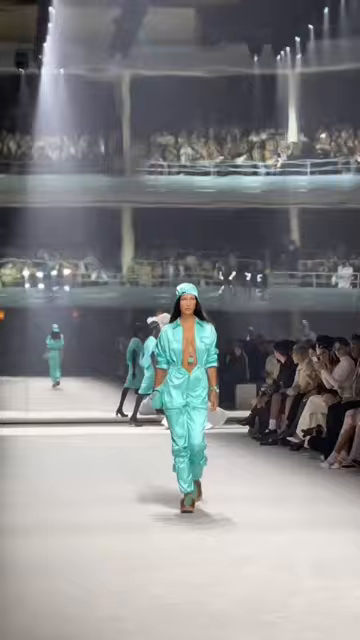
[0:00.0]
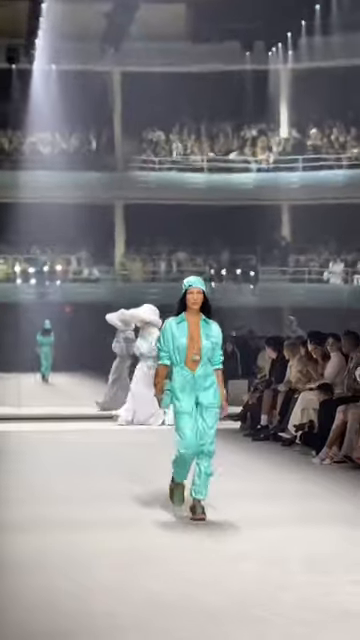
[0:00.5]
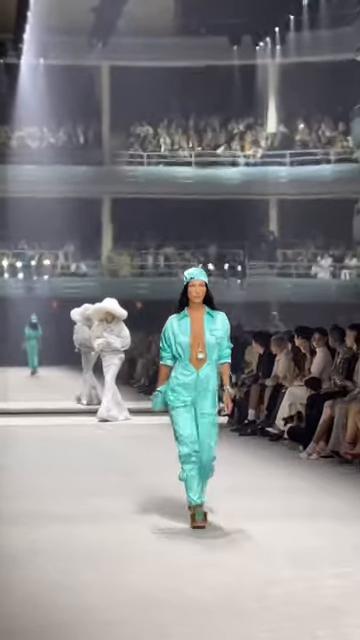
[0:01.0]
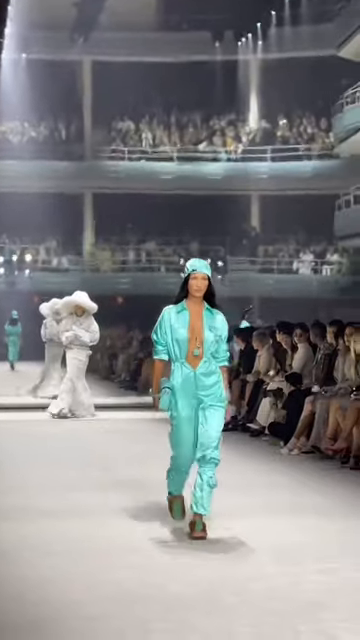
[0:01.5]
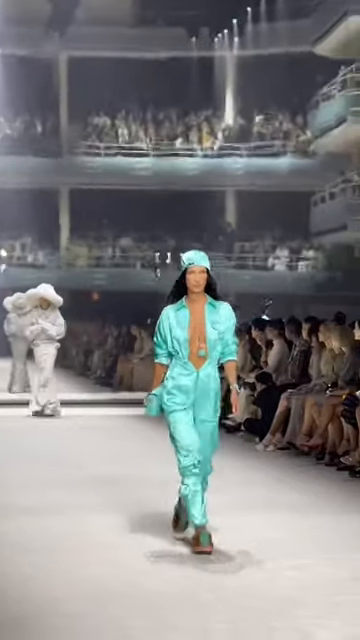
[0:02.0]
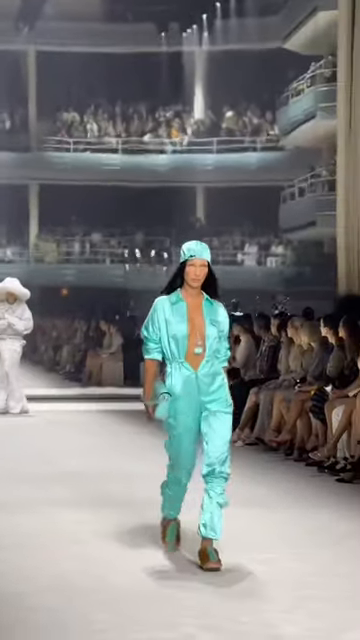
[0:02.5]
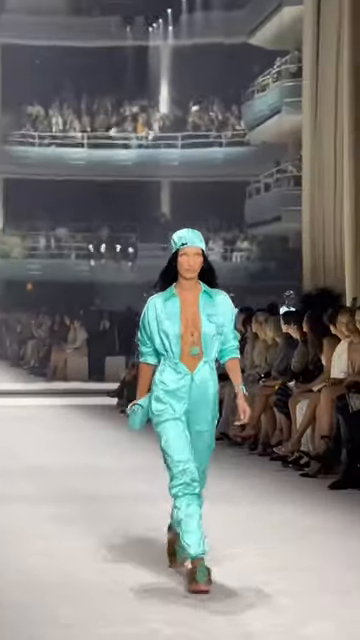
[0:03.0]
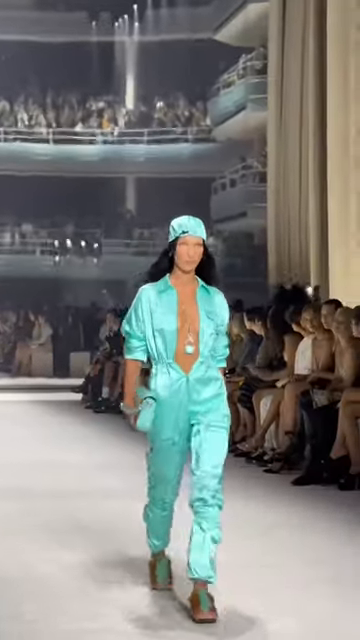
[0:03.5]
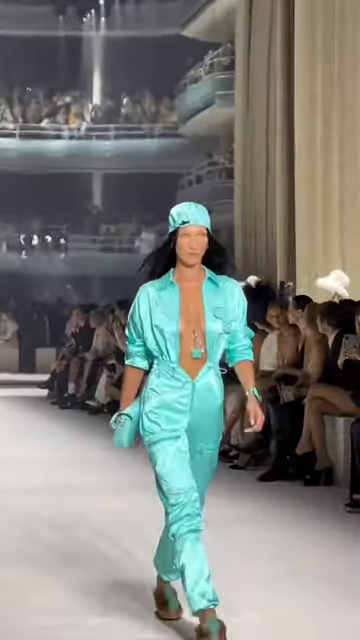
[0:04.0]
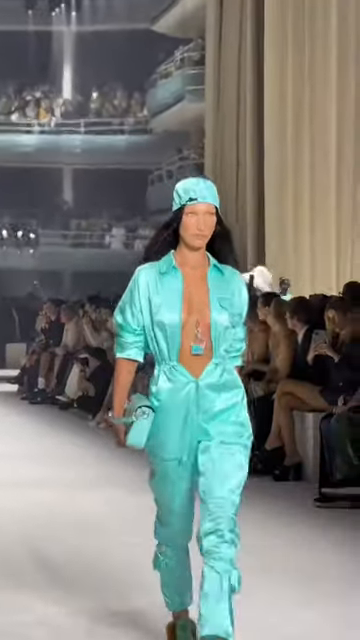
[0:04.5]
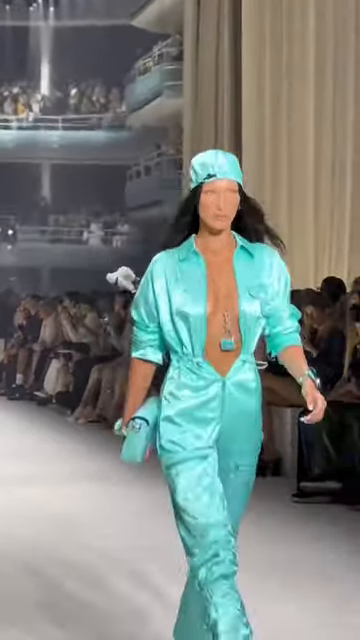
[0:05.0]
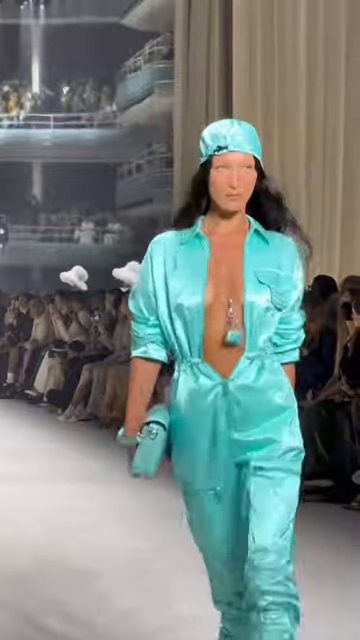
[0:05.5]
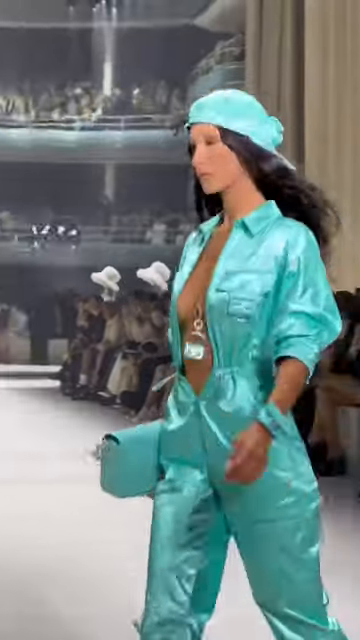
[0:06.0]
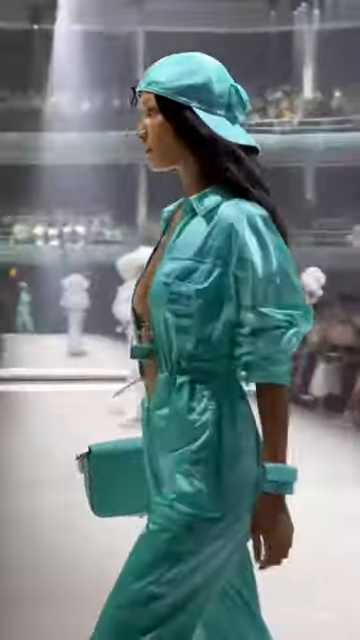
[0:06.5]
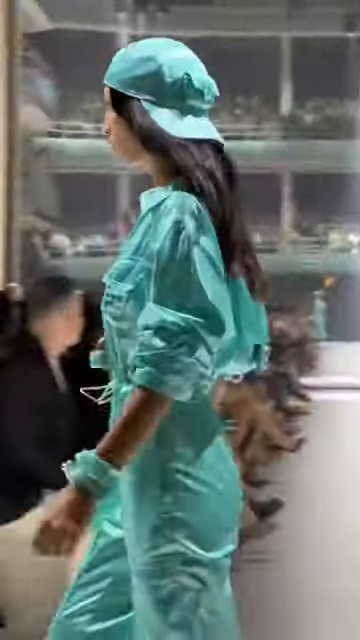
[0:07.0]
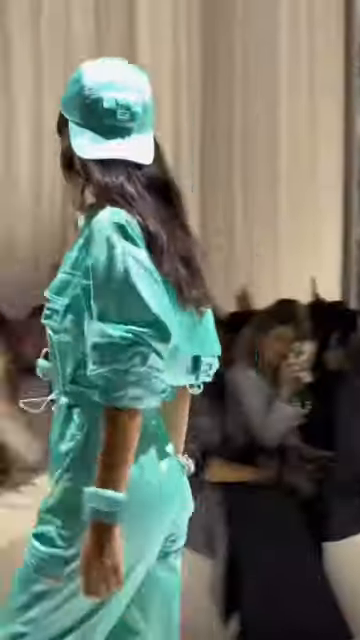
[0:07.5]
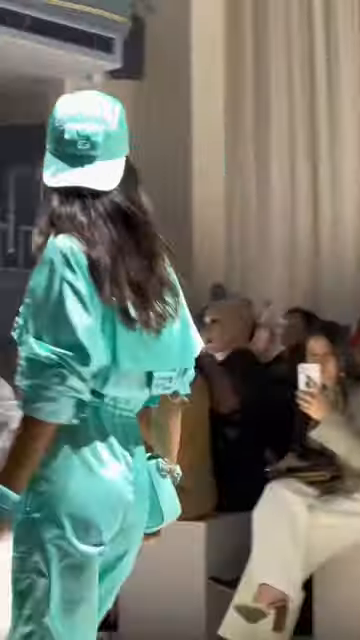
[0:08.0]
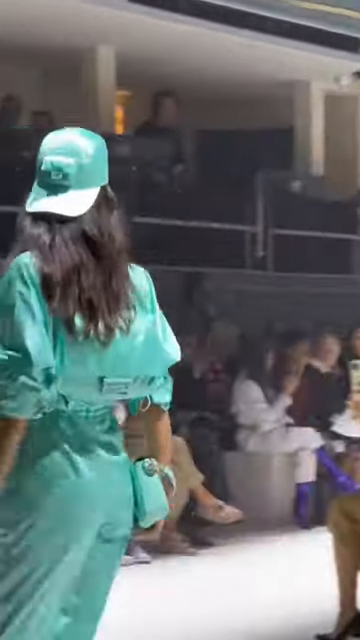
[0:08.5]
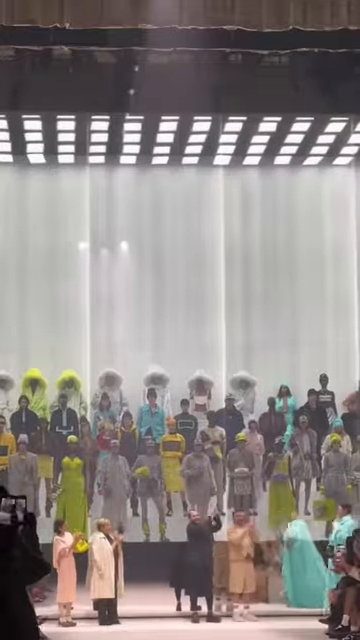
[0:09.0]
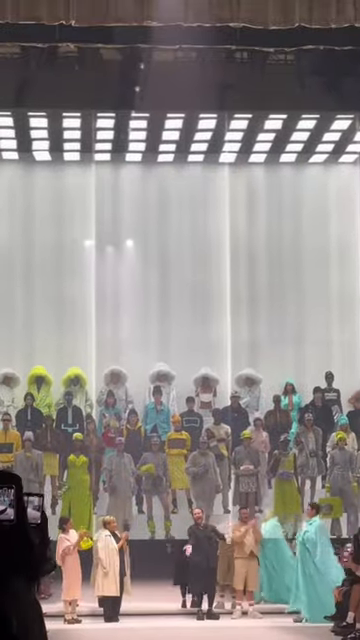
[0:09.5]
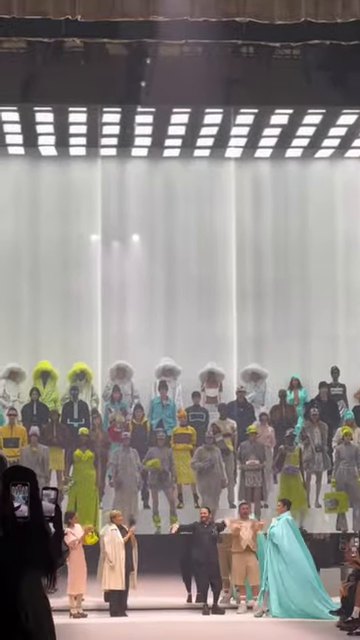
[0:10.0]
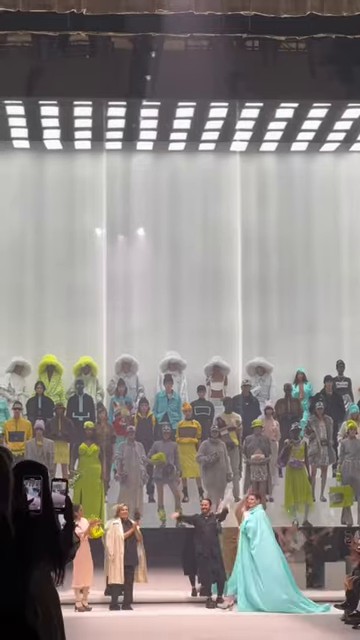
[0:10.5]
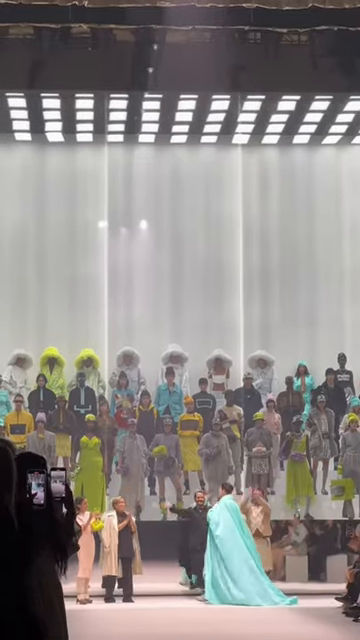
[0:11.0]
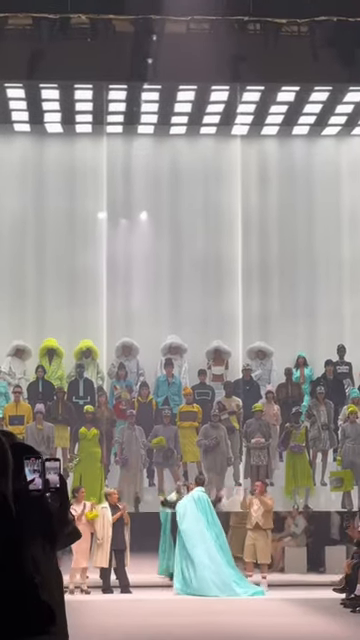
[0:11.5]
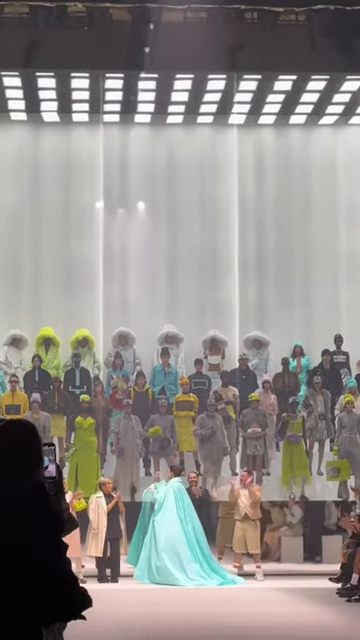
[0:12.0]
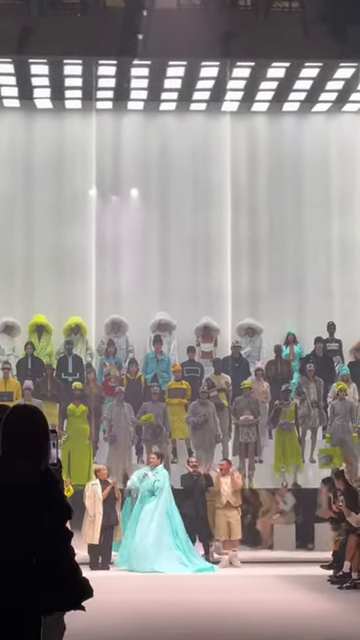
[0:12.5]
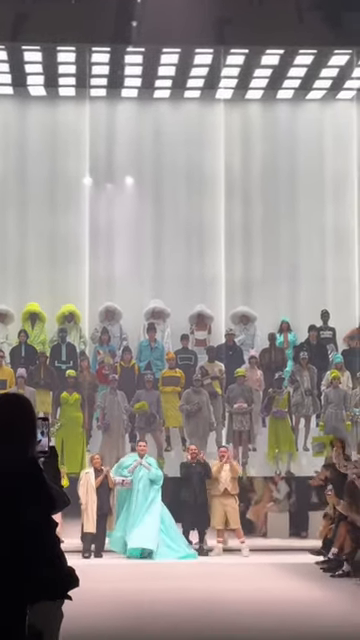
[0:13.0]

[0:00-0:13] A woman walks the catwalk in what looks like a teal jumpsuit. It is open down the center, all the way to her navel, and she wears a necklace with a blue cube on it. She has on a teal hat, like a backwards baseball cap. Her sleeves are rolled up just below her elbows. She holds a teal purse in her hand and also wears a teal bracelet. Her shoes are large, and their color is hard to make out. She walks straight forward, then goes to the right, revealing a bunch of people watching, and the camera pans over. The last bit of footage appears to show the designer coming out with all of the models while everyone claps for the models. It looks like a big fashion show, with this woman walking the runway.